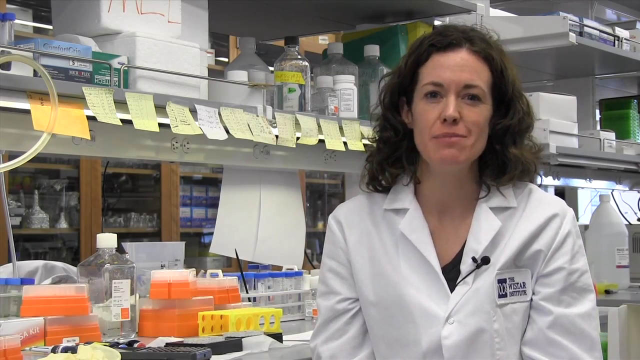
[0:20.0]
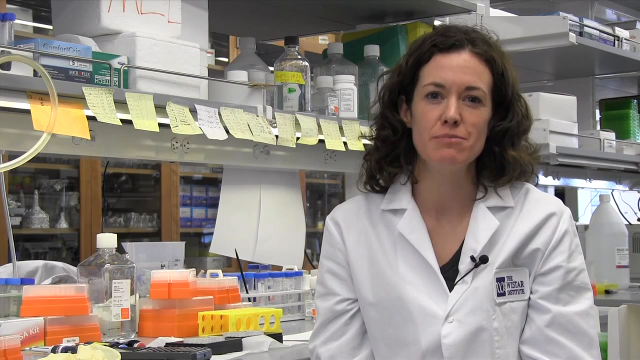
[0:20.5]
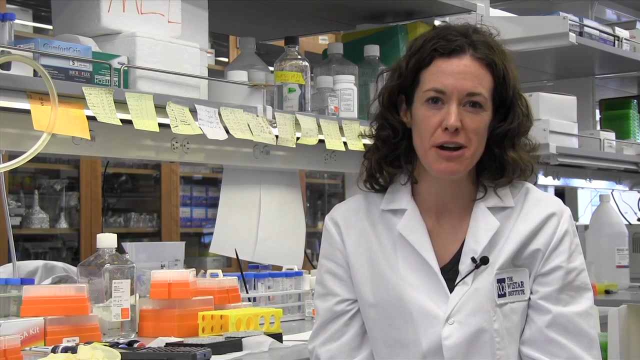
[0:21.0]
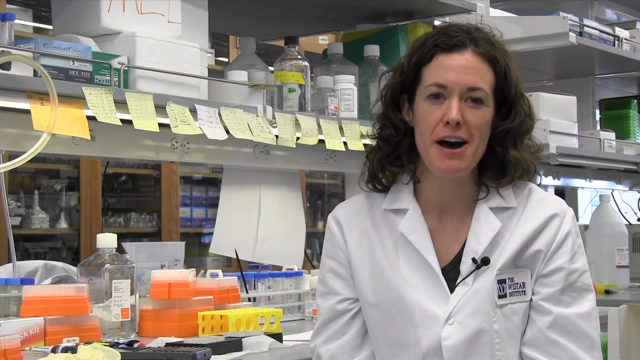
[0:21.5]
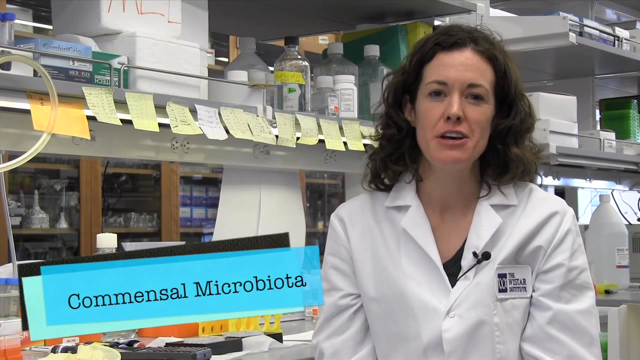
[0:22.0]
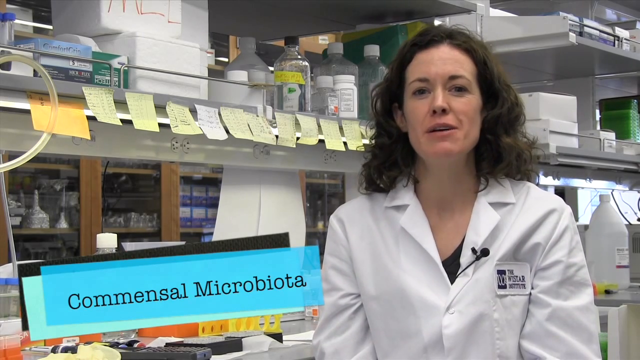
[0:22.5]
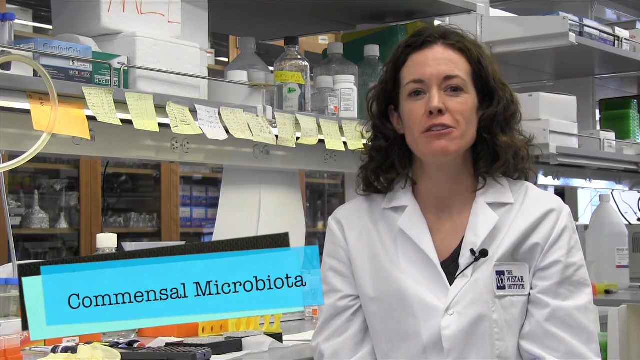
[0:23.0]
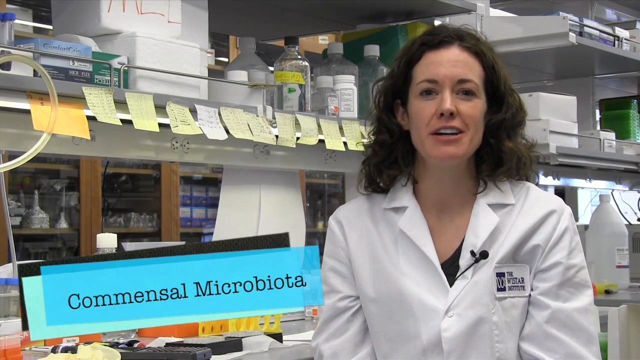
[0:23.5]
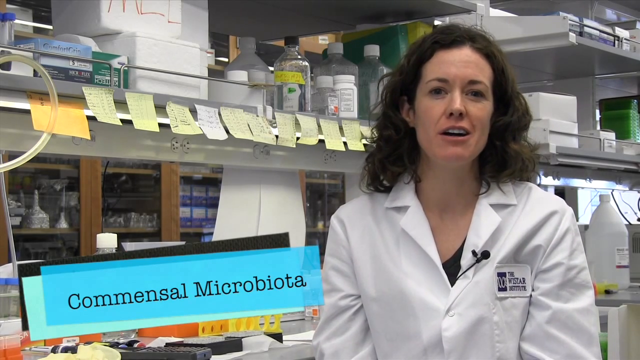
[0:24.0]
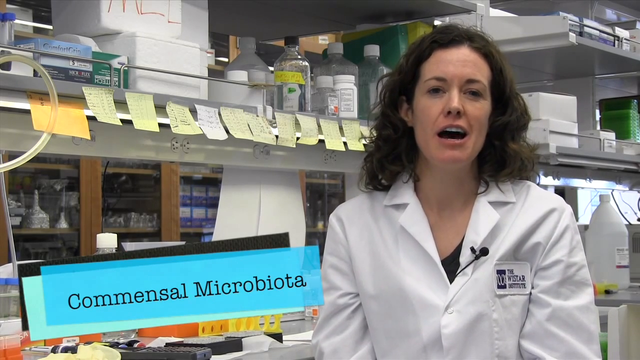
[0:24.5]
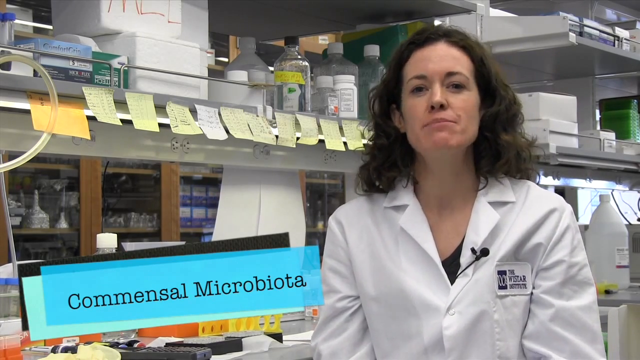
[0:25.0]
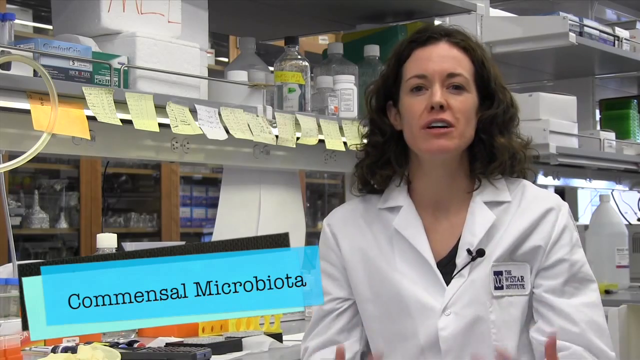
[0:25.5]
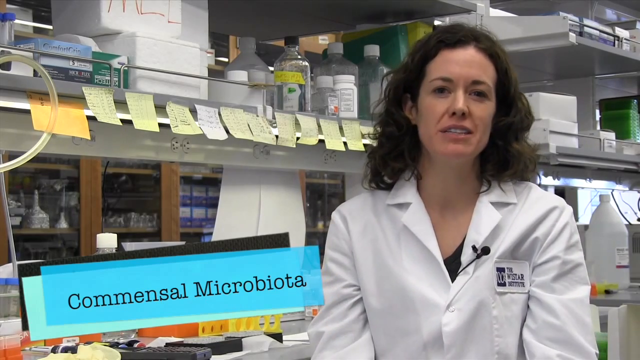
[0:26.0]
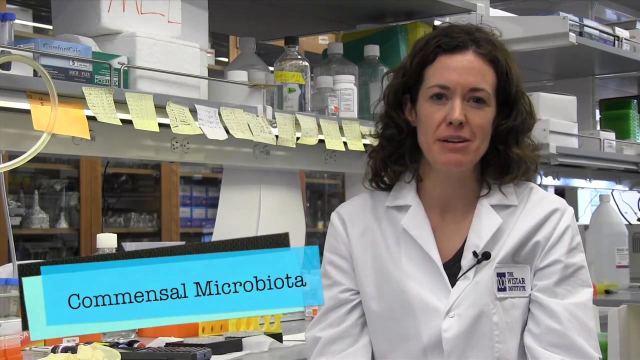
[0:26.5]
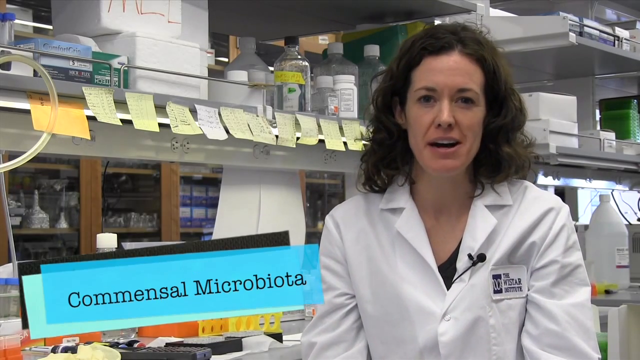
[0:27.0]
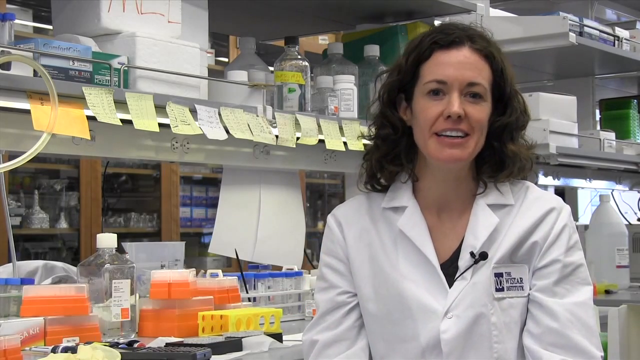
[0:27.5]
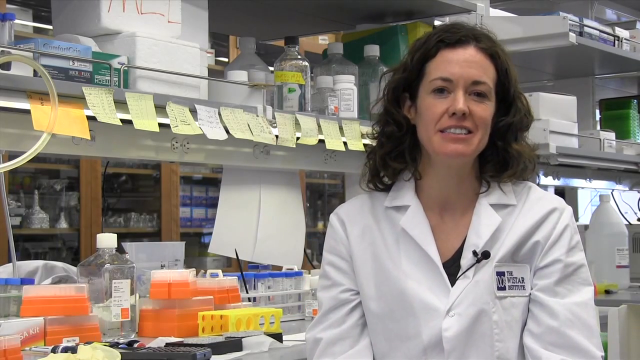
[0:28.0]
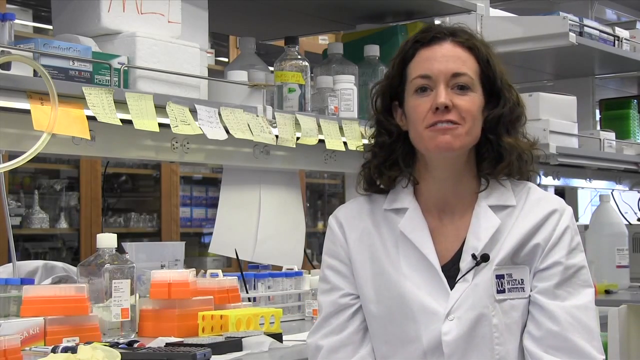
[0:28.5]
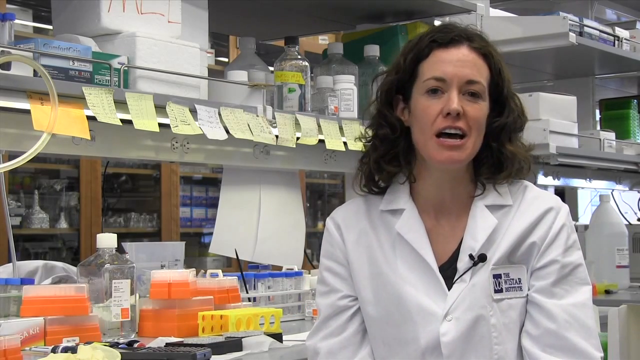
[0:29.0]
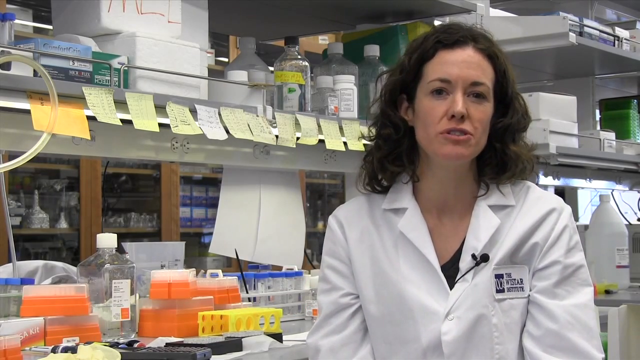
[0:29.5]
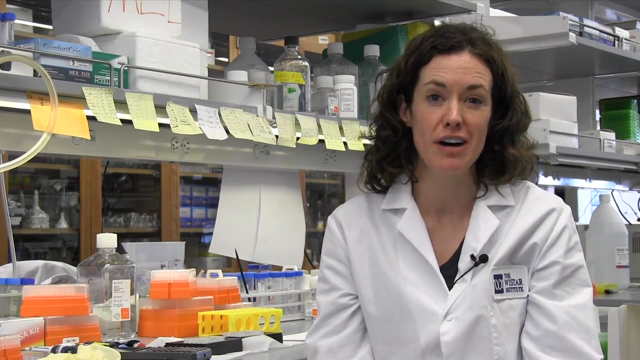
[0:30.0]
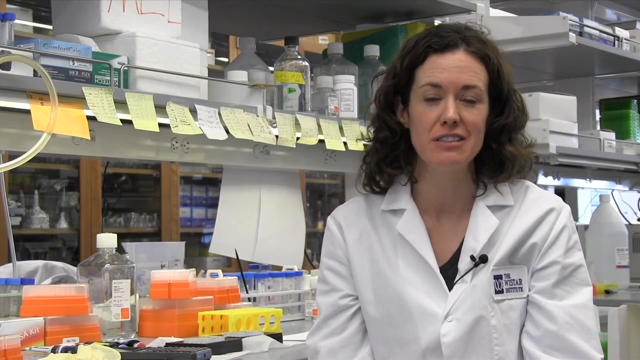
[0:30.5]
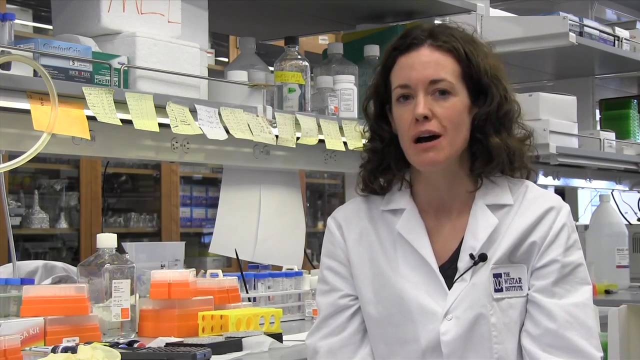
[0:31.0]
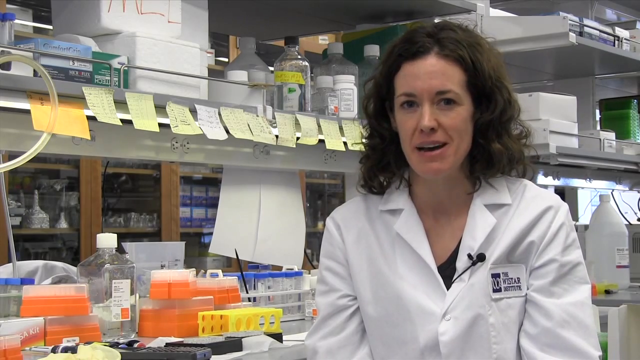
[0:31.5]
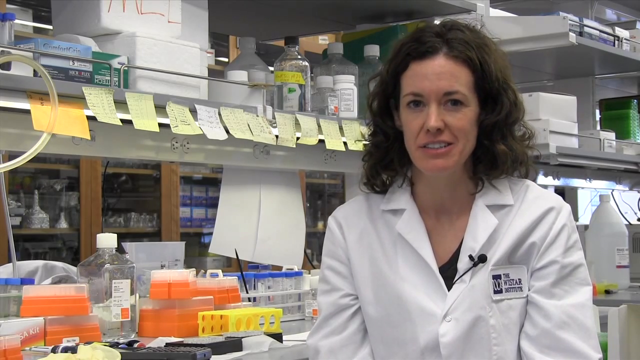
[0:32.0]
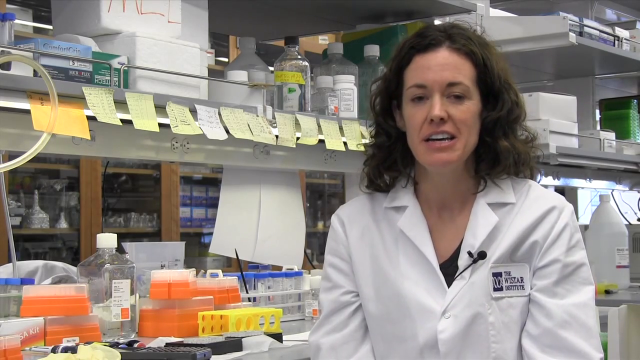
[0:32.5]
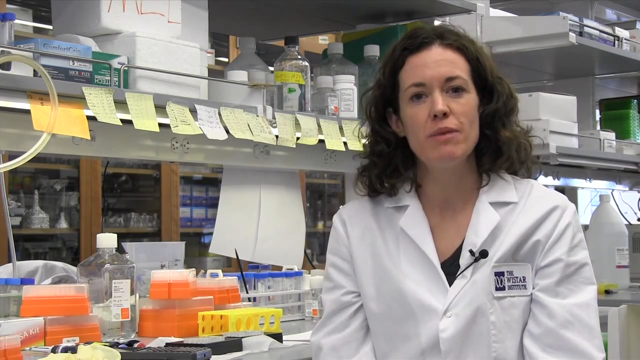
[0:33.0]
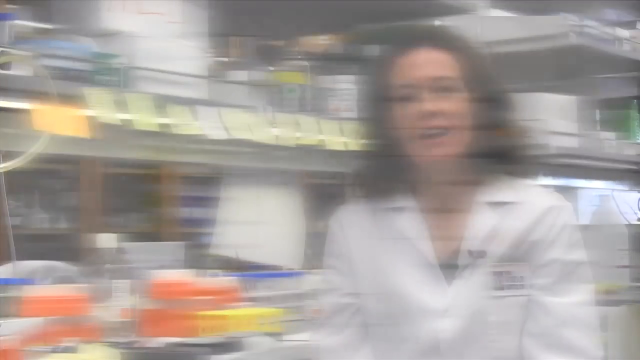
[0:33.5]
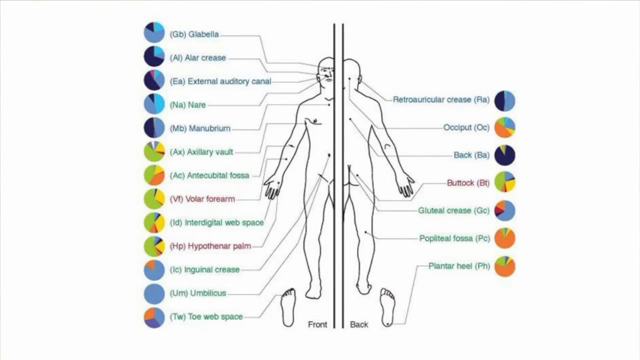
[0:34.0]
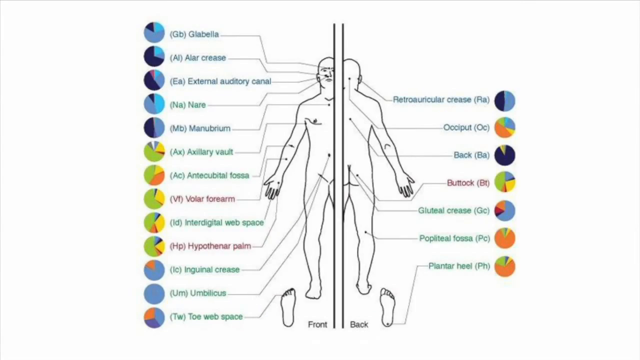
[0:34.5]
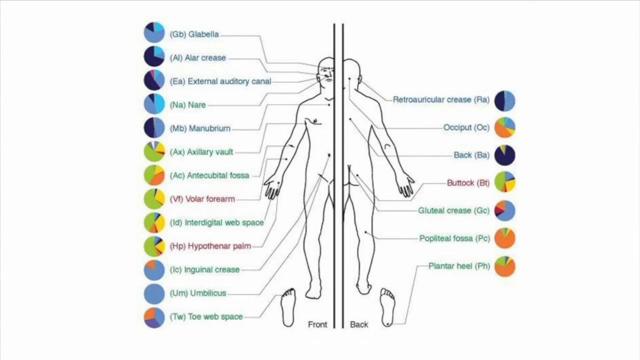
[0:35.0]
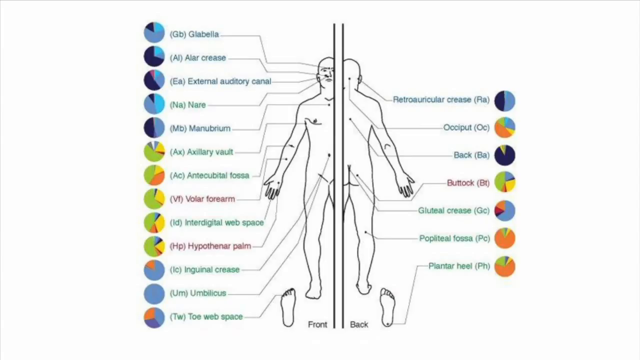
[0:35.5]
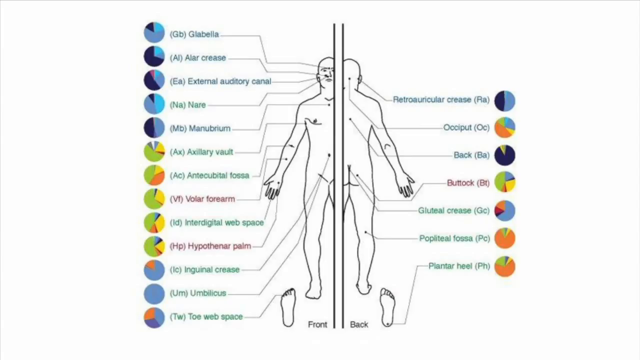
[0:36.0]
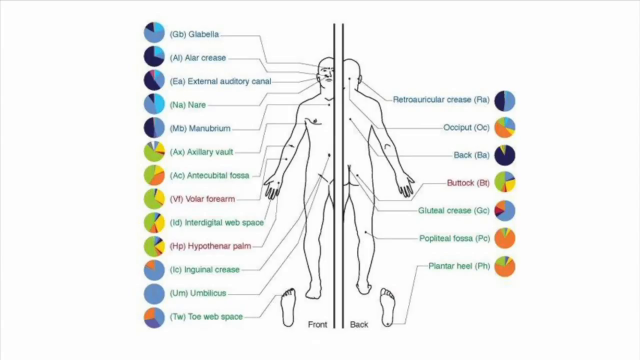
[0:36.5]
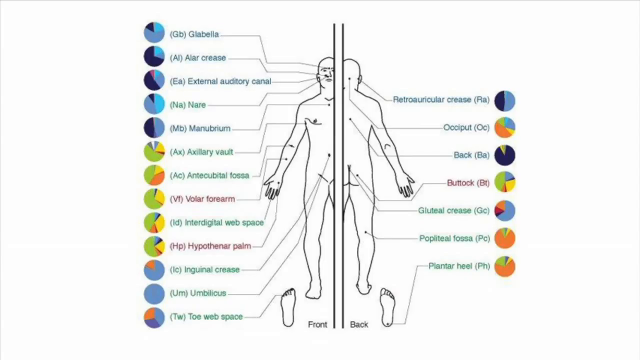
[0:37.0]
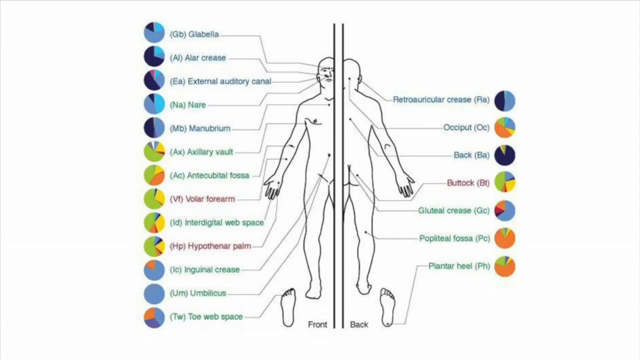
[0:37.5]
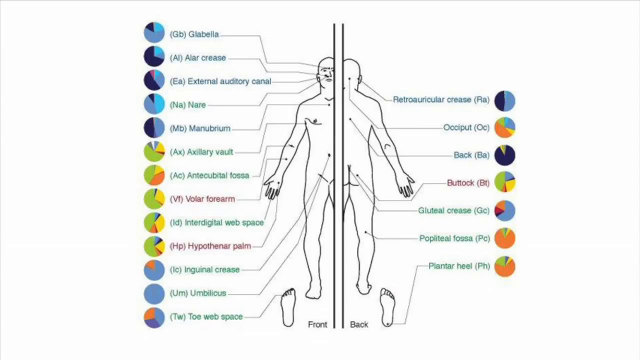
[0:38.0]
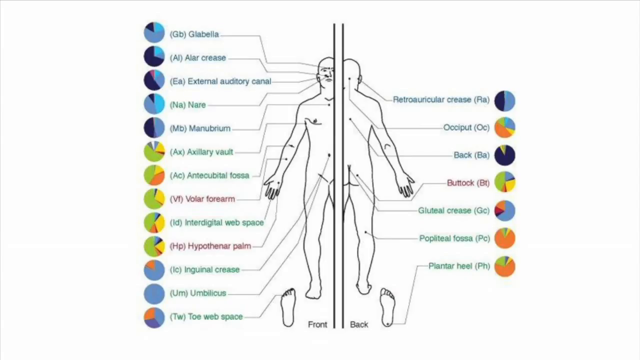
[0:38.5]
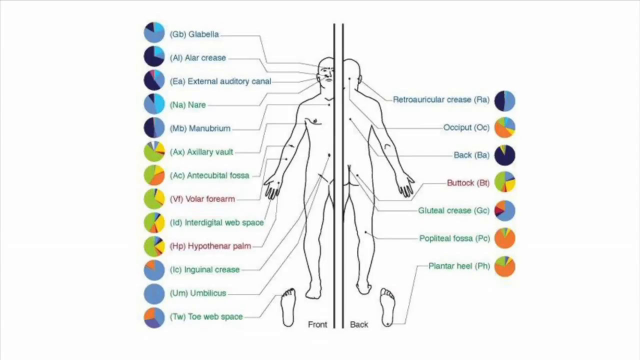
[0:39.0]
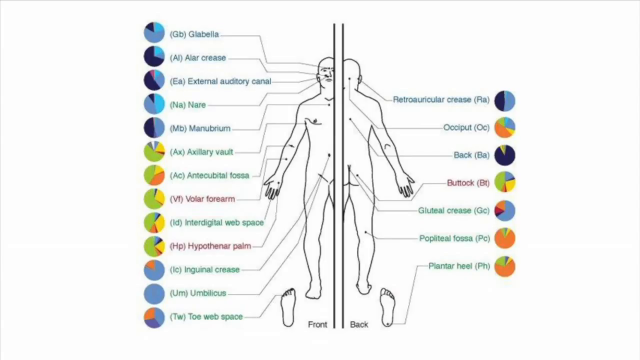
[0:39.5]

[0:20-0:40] A woman in a lab coat sits and is seen from roughly the chest up. She is Caucasian, with dark eyes and curly dark brown hair that reaches her shoulders. A little of a black shirt peeks out from under her lab coat, and on the left side of her chest there is a small identifying badge with black text. Behind her is a lab with lots of things on the counter. About midway up the image, many sticky notes appear to be stuck in front of a shelf, which holds lots of bottles and other items, and cabinets are in the background. She talks. In the lower left, some of the things on the counter are mostly yellow and orange and look like small plastic containers. A bright blue text box, angled up slightly to the right, appears with black serif text, first letters capitalized, reading "Commensal Microbiota"; a couple of other boxes, one green and one black, sit behind it to give it dimension or shadow. The text disappears and she continues talking. The video then switches to a diagram: an outline of a body, split down the middle, with the hand palms up and held a little away from the body, and many lines coming out to labels on each side.